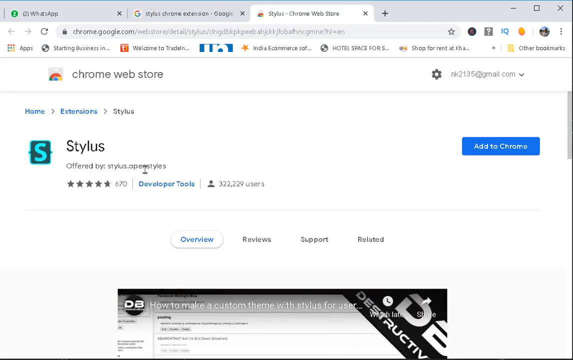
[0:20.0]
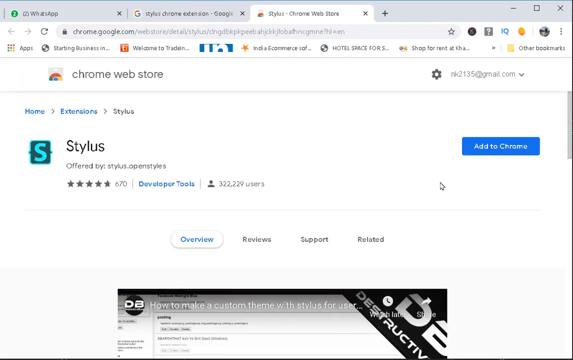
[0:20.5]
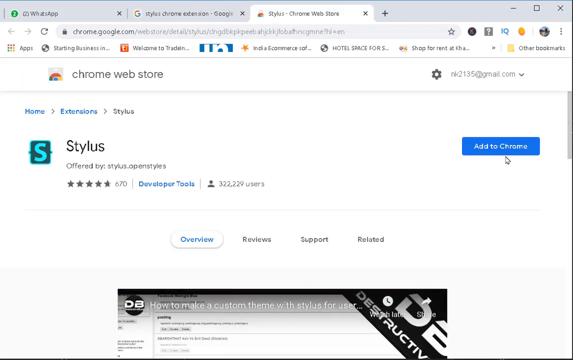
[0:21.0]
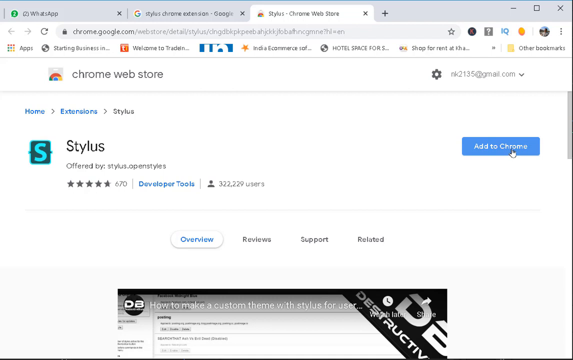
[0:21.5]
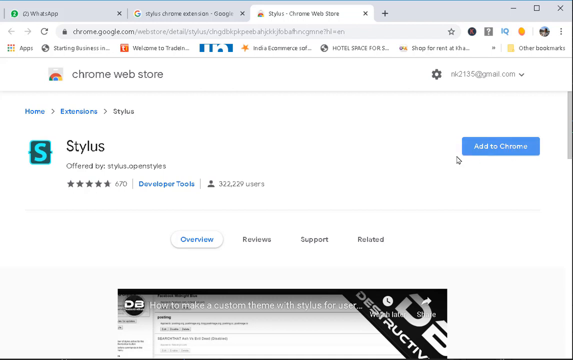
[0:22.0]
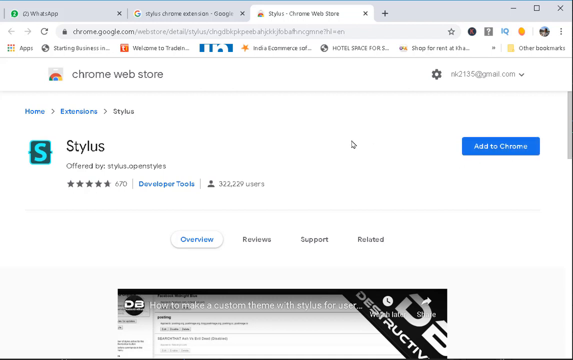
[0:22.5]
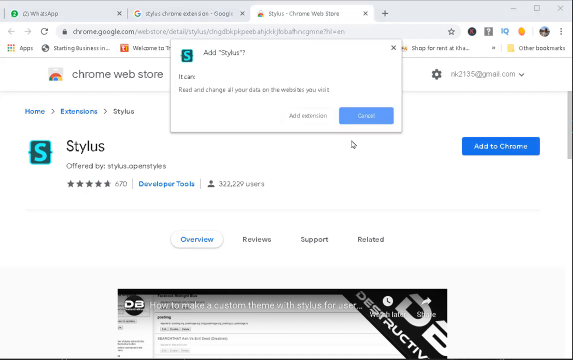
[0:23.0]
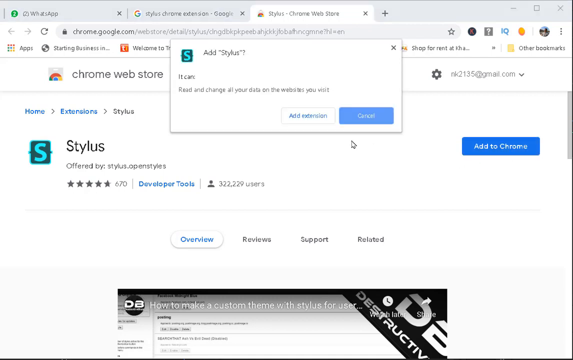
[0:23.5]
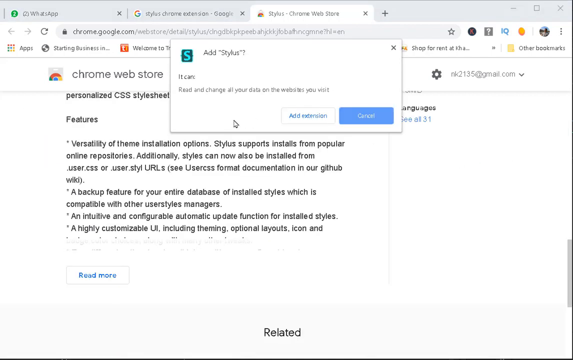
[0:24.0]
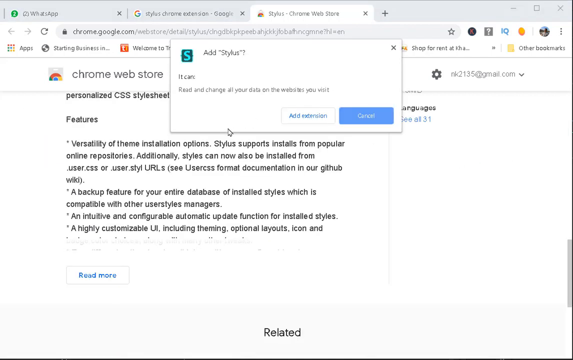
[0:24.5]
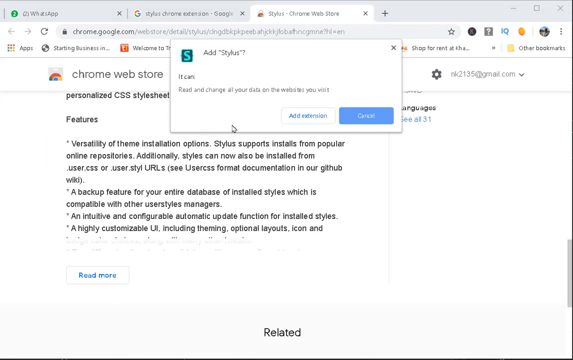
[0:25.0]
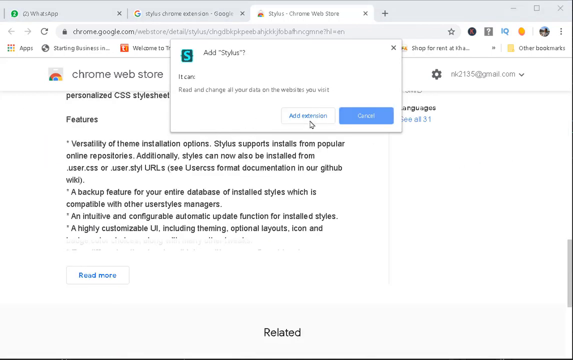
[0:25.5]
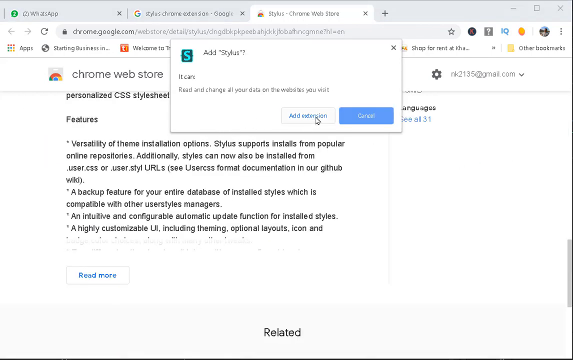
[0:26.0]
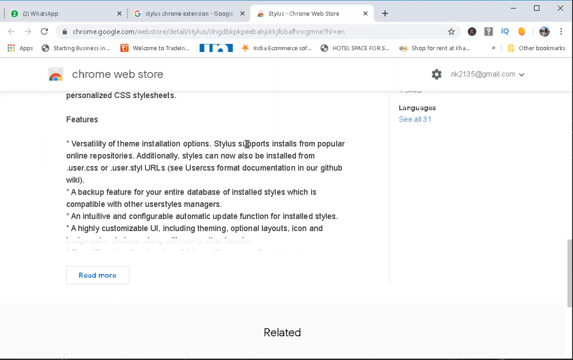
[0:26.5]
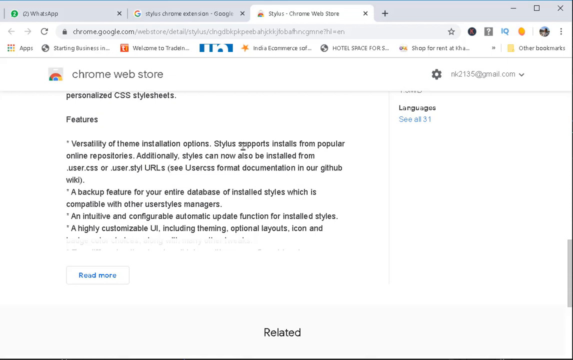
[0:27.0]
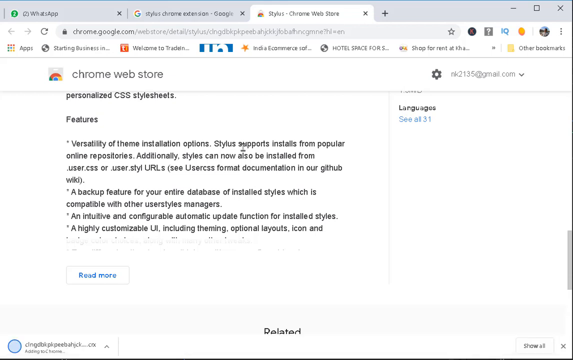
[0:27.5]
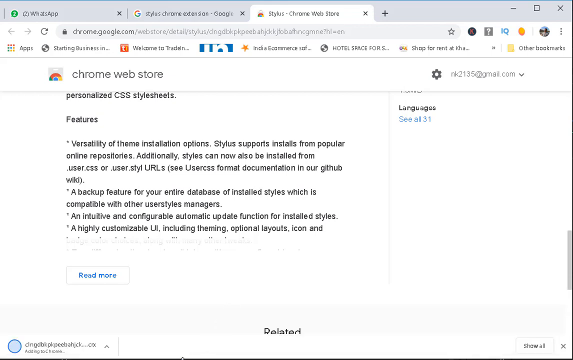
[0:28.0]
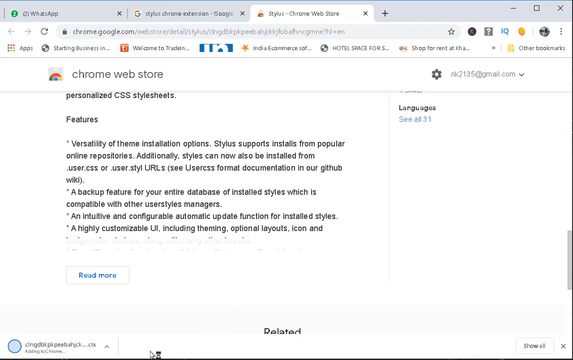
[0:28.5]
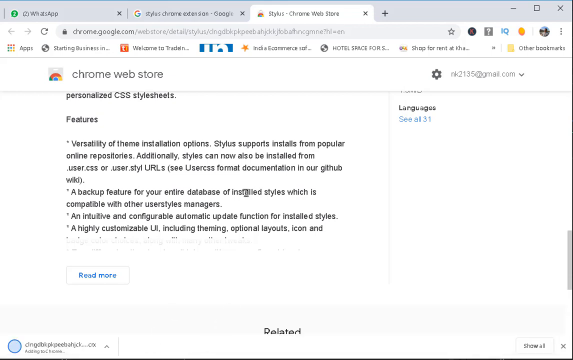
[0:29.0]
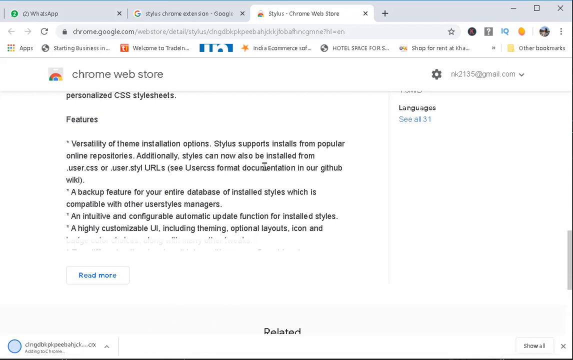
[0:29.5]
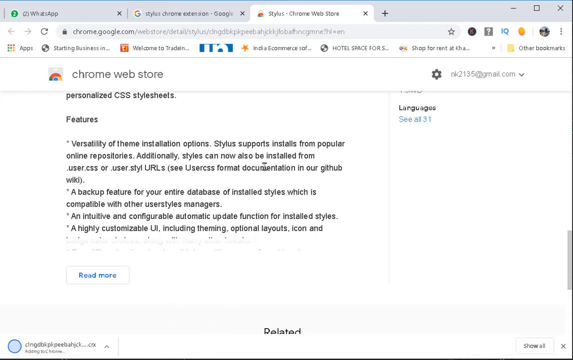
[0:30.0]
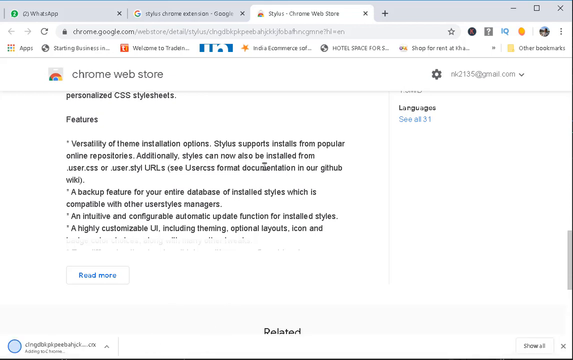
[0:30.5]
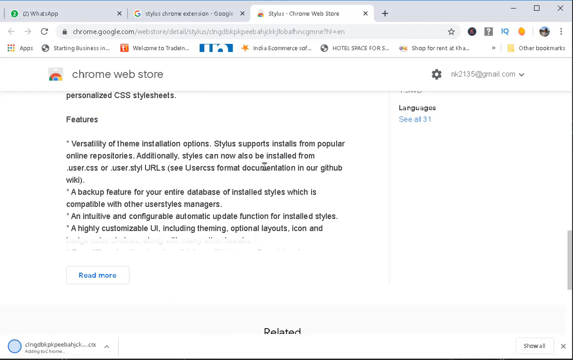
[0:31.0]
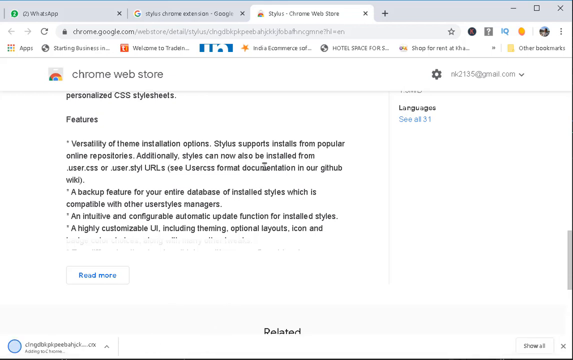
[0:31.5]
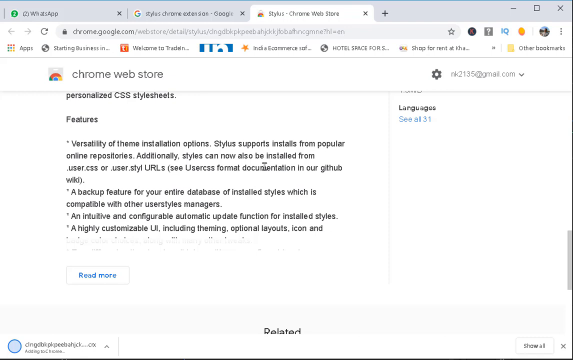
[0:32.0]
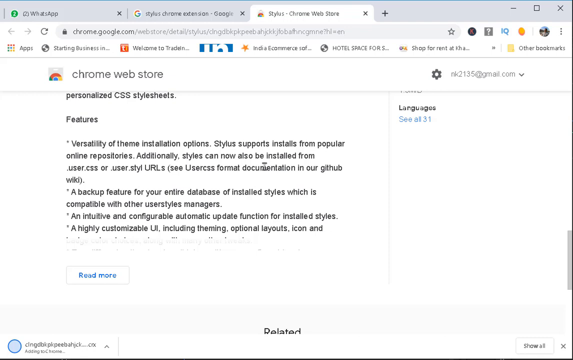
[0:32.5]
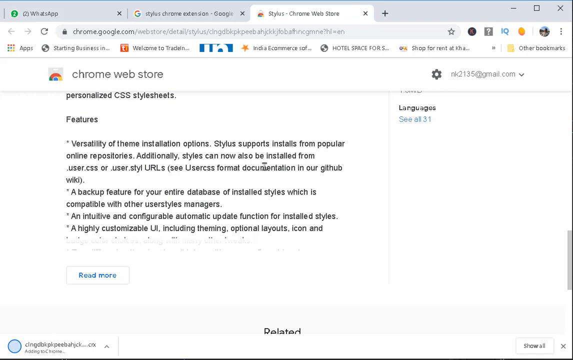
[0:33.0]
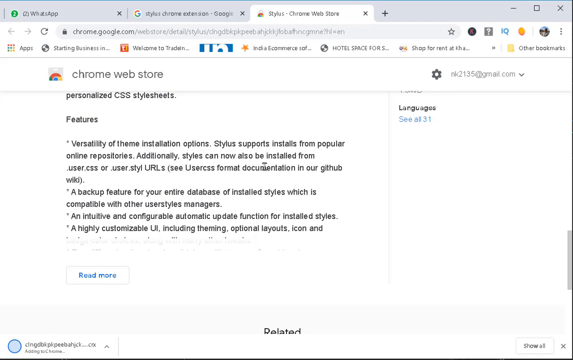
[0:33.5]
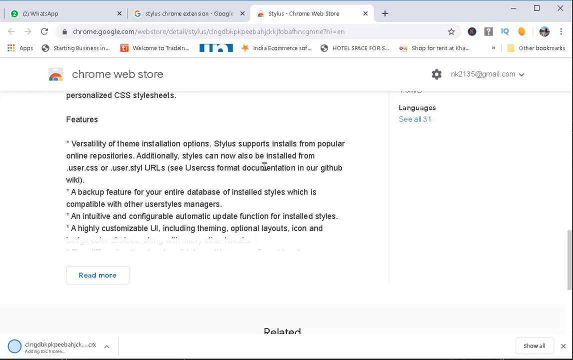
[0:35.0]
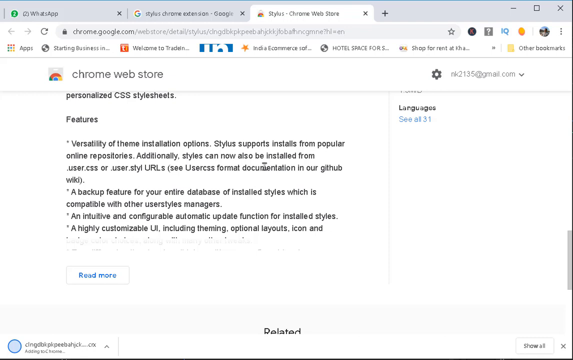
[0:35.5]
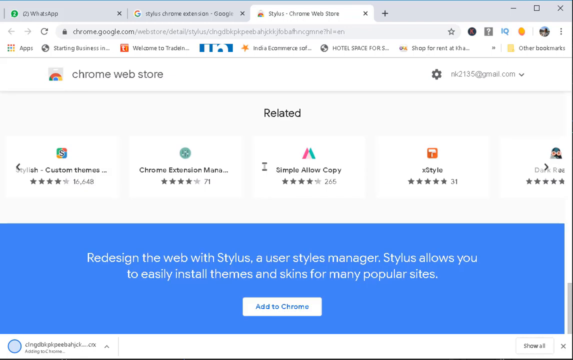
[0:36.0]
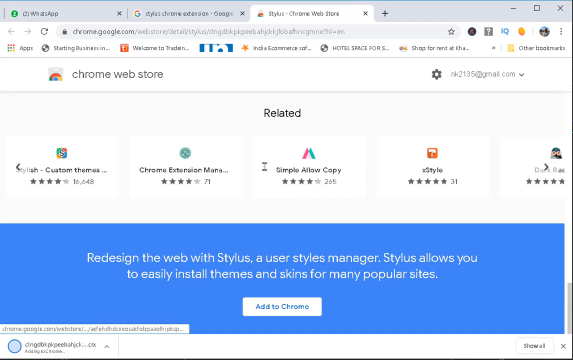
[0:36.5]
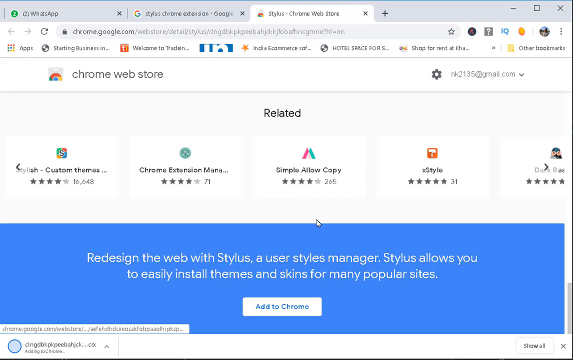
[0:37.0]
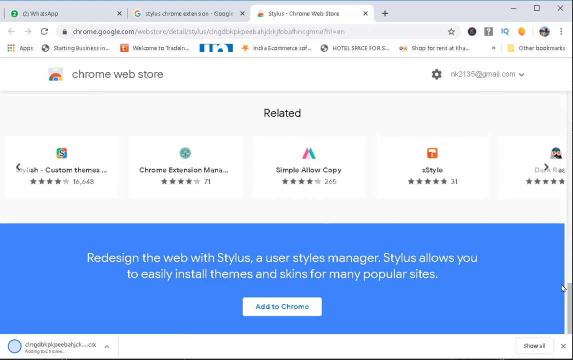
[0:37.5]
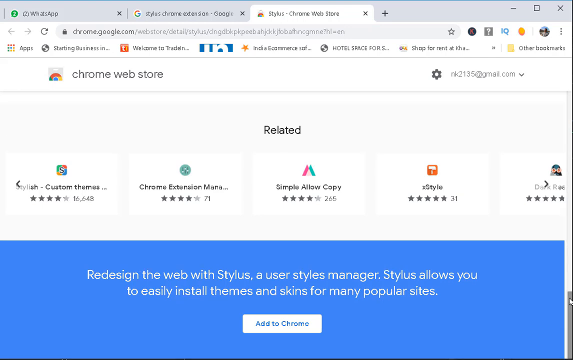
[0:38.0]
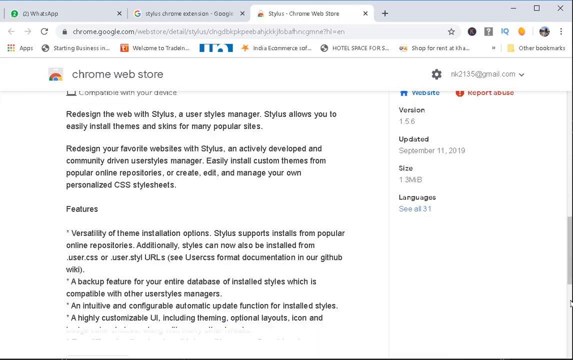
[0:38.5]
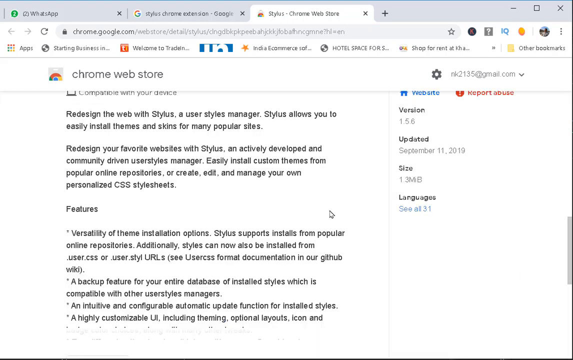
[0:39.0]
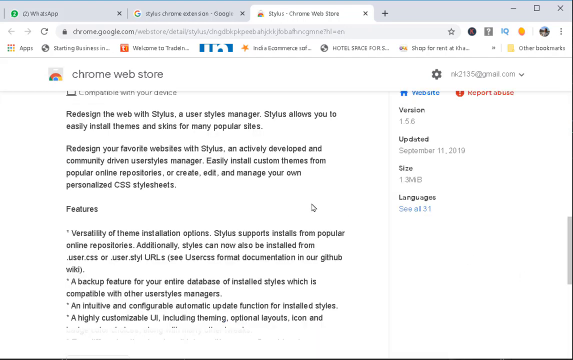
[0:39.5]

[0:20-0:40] The Stylus extension page in the Chrome browser shows an "add to Chrome" option and a list of features, including theme installation options, installing styles from popular online repositories, installing from user CSS or user style URLs, a backup feature for the entire database of installed styles compatible with other user style managers, and automatic updates for installed styles. A list of different languages is available, along with a "read more" option for further features. Related extensions are listed, including one called simple allow copy and a custom theme, under the line "redesign the web with stylus, a user style manager."